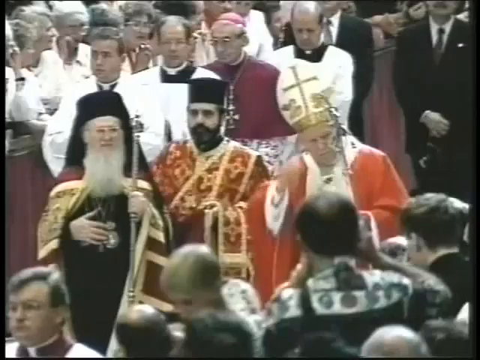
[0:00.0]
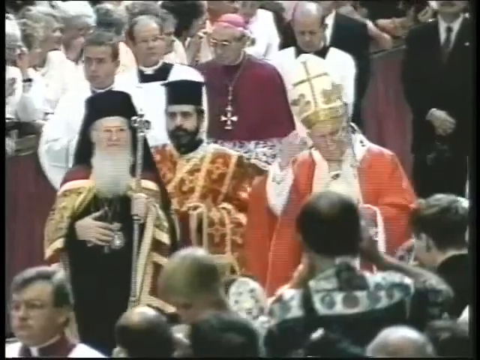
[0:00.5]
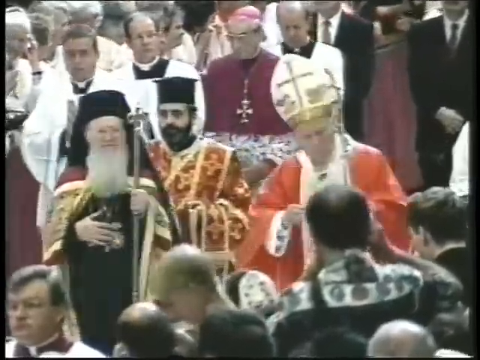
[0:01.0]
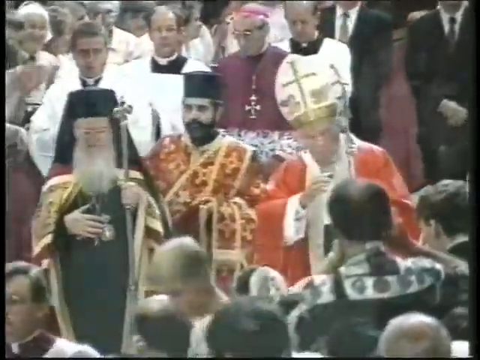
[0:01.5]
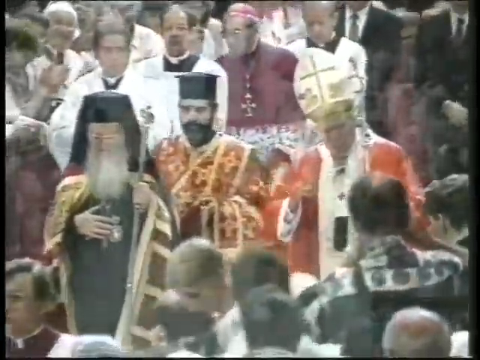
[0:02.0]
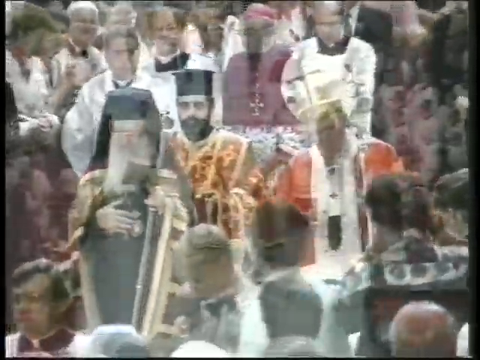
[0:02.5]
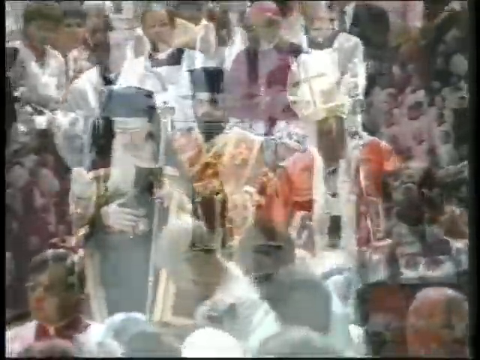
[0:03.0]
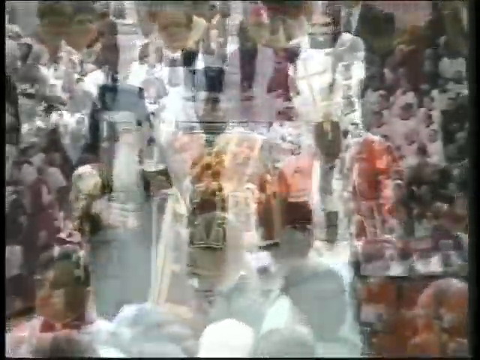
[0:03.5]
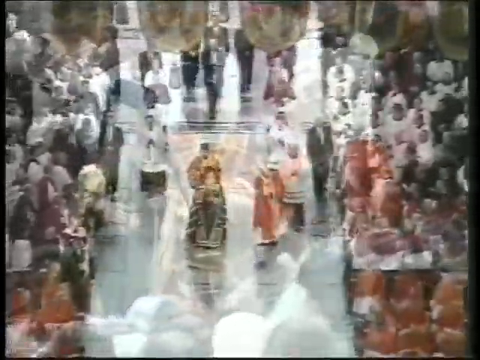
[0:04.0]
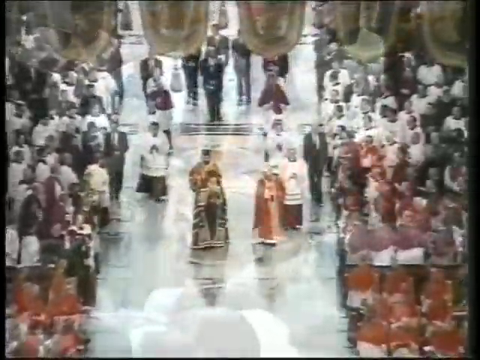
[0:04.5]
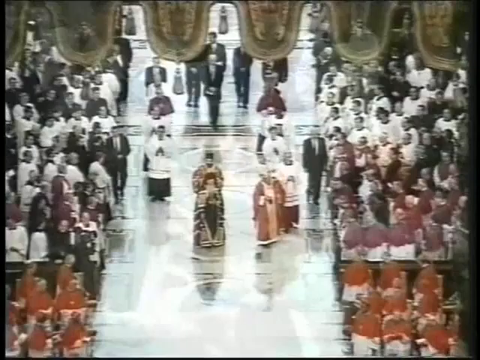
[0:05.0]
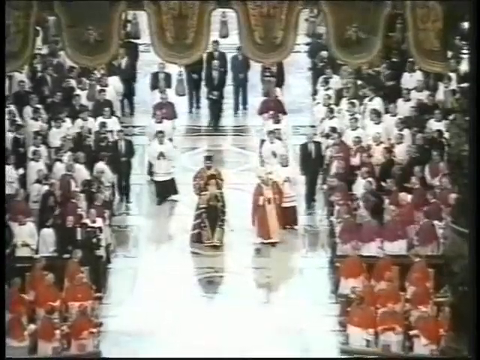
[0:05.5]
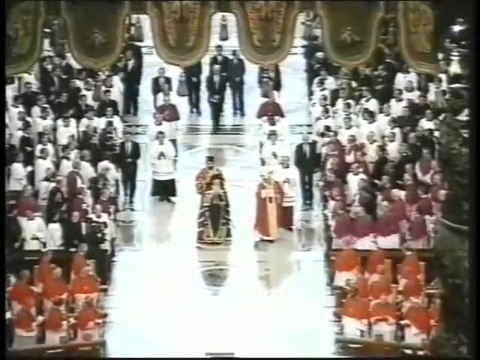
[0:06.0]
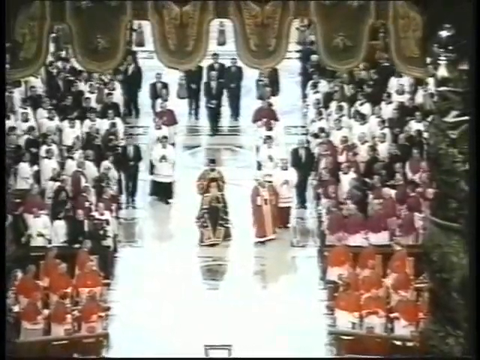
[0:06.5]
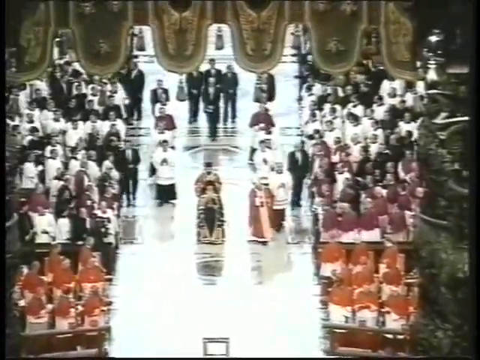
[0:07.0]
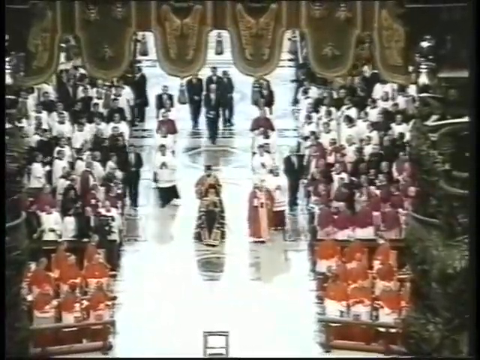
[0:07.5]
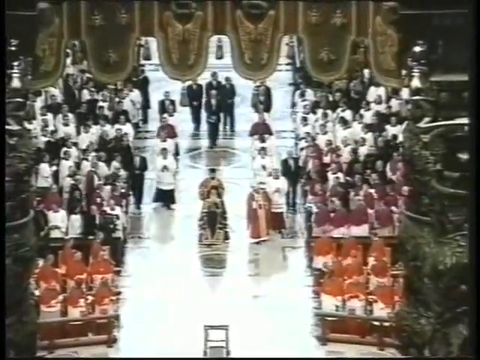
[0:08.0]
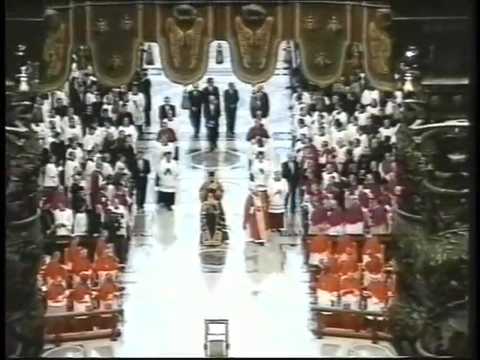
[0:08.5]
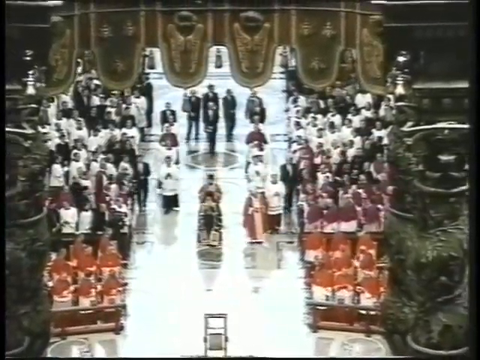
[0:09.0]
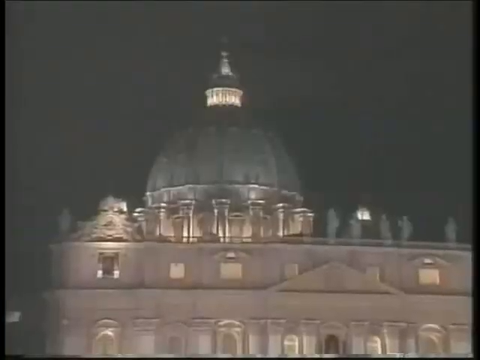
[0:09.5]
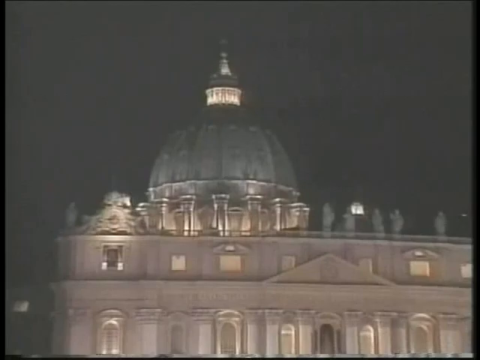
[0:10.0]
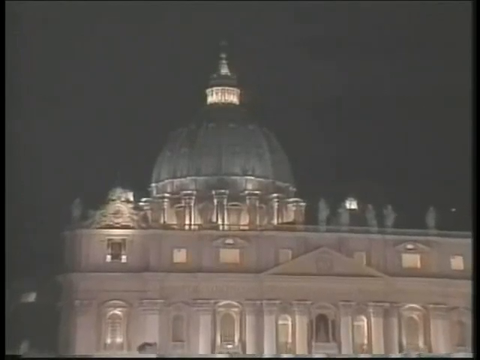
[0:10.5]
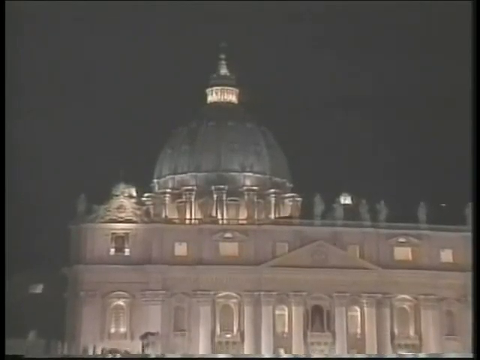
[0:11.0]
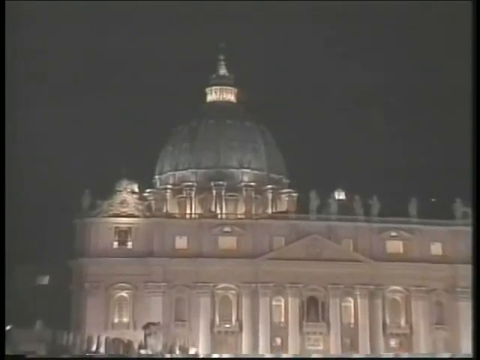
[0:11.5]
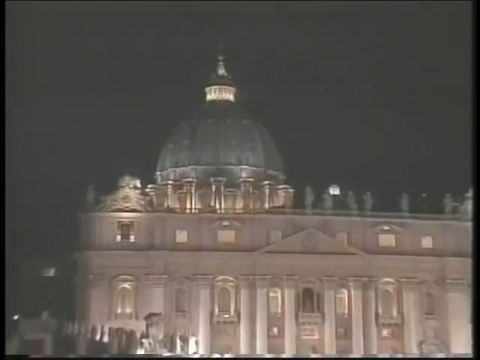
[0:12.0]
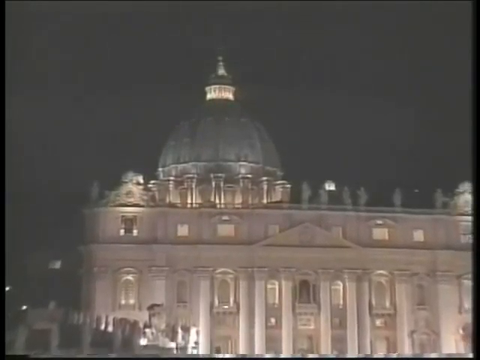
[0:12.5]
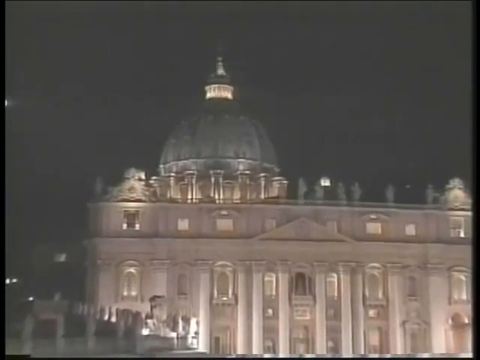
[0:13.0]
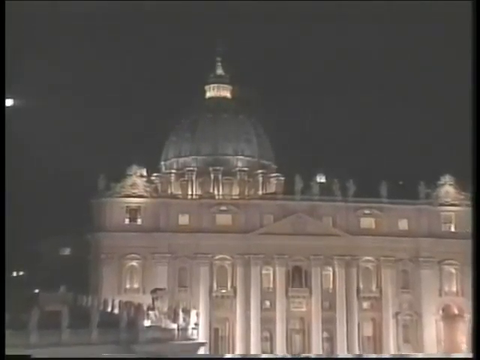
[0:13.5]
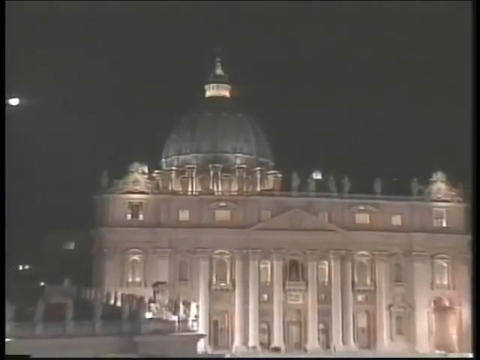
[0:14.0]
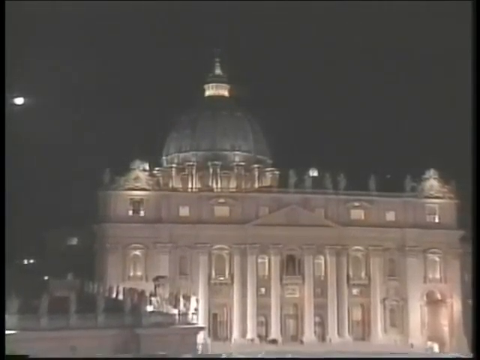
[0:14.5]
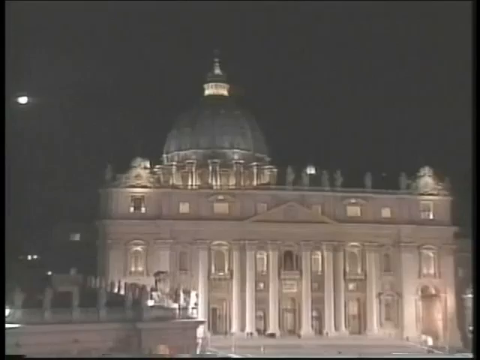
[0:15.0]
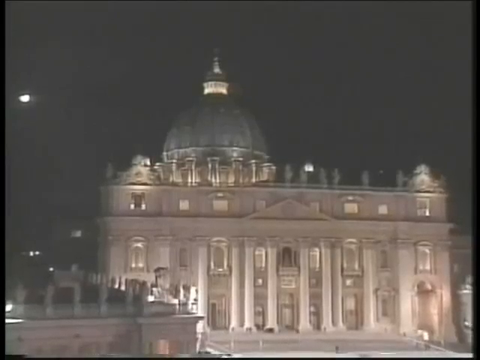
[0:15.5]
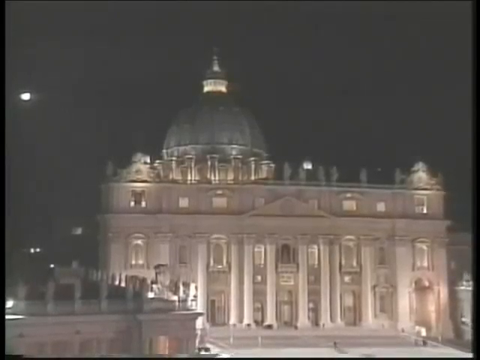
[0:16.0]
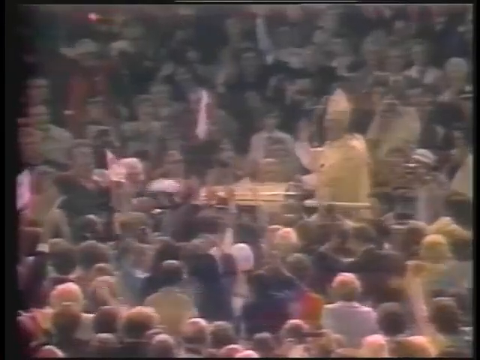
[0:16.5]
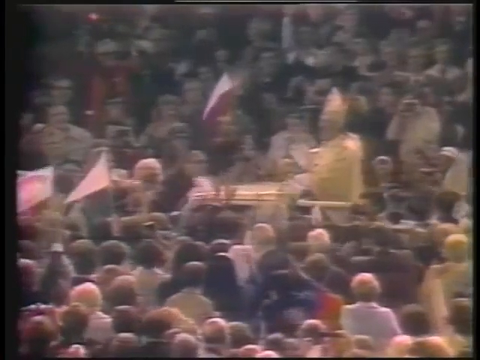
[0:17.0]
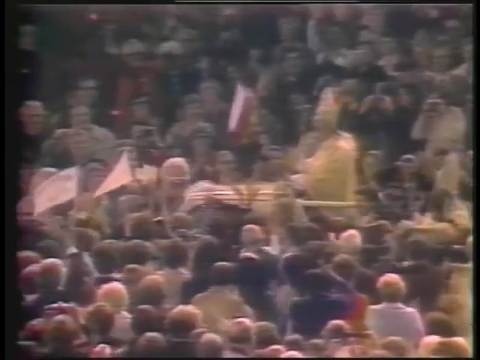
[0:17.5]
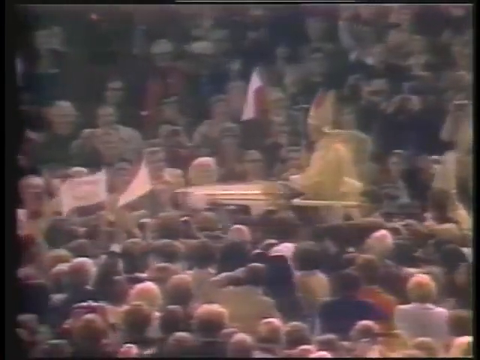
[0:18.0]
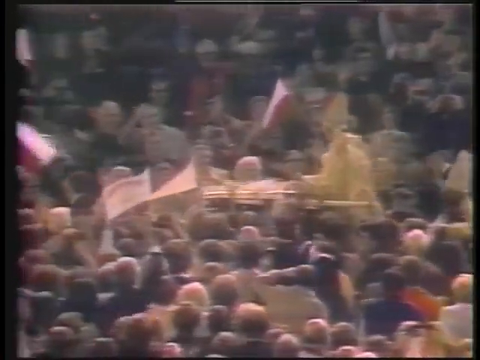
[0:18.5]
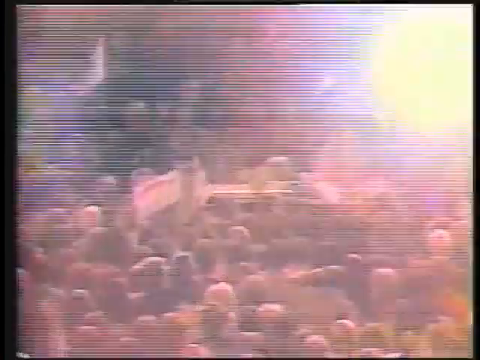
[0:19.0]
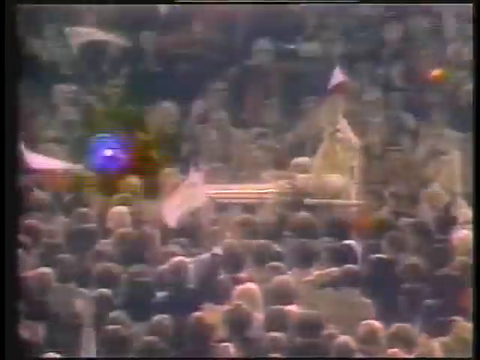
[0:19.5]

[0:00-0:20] A Catholic ceremonial scene opens the video; the image is slightly blurry, as if from 1980s TV. The Pope wears a white undergarment with a red shawl and a white hat with a gold cross in the middle of it. In the middle is another man, bearded, slightly taller than the Pope, with black hair, wearing red garb with gold embellishment. To the right of him is a shorter, white-bearded man, slightly shorter than the Pope, whose long, very square beard comes down to his upper chest; he holds his right hand across his chest with fingers splayed and wears black, with a black headdress that has a train. Behind them is a congregation of people wearing suits and some dressed in white, walking down the center of the cathedral, with stalls on each side. At the bottom of the frame are two rows of people wearing predominantly red dress with white bottoms, and beyond them a full congregation of people in red, black and white. The building appears to be Saint Peter's Basilica at night; the lights are glowing and it is very dark. The camera slightly pulls back to show the whole of the building. The scene then cuts to the Pope wearing a yellow shawl, standing in the back of an open-top car, again in blurry, 1980s-TV quality. The car is in the center of the shot, moving slowly from right to left; only the very top of the car is visible, and on either side it is crammed full of people.